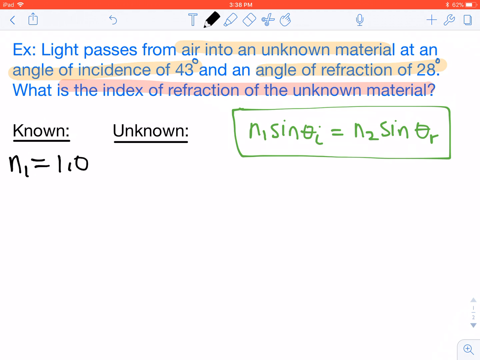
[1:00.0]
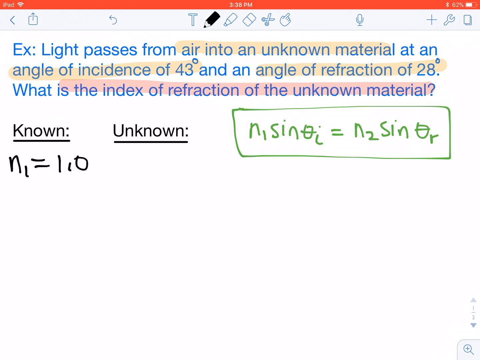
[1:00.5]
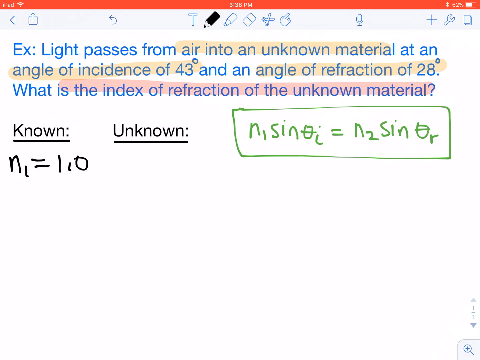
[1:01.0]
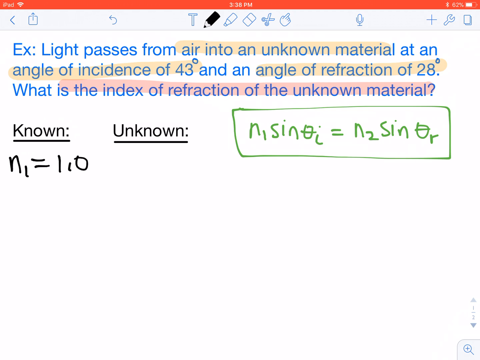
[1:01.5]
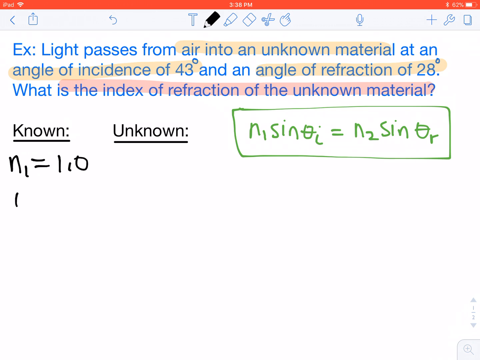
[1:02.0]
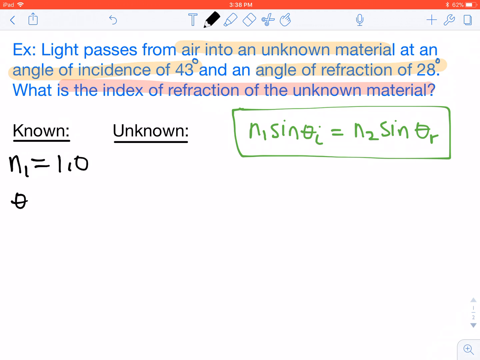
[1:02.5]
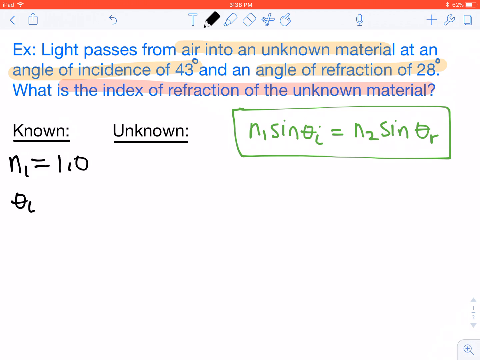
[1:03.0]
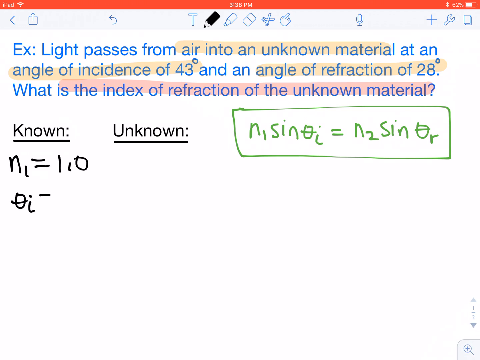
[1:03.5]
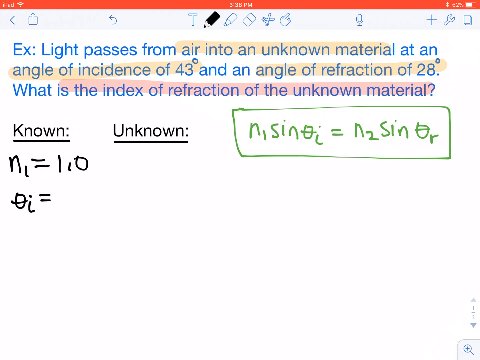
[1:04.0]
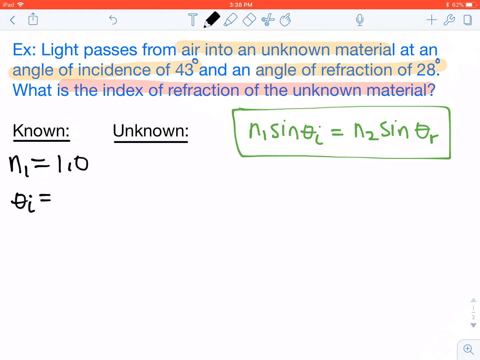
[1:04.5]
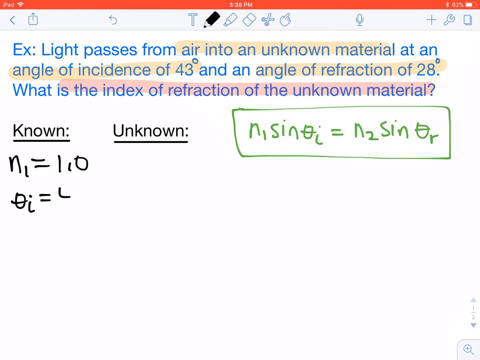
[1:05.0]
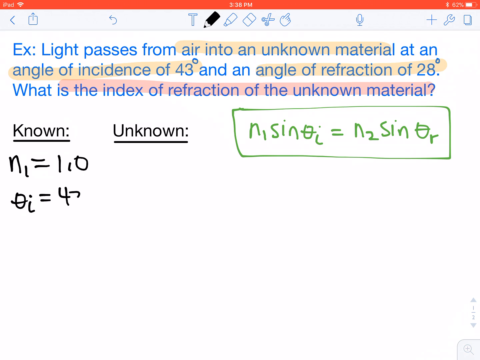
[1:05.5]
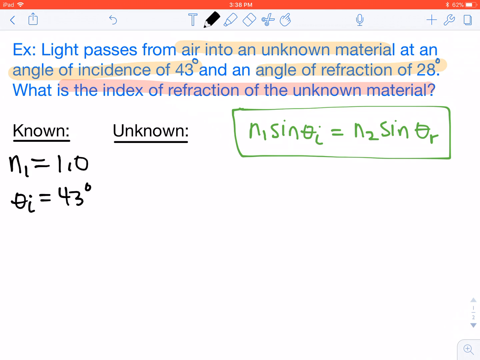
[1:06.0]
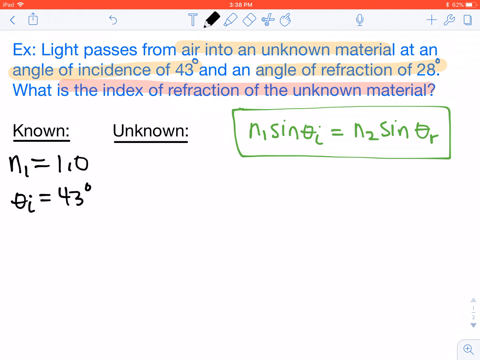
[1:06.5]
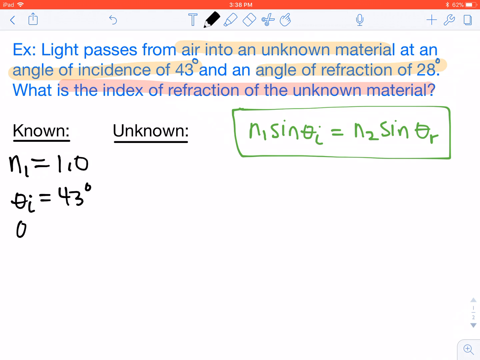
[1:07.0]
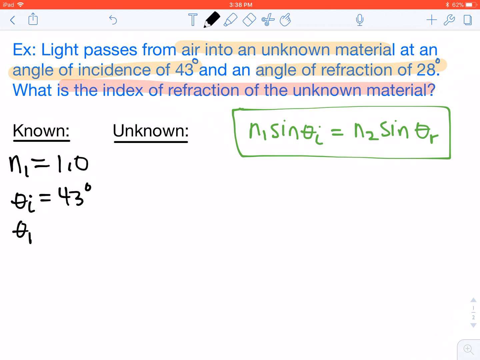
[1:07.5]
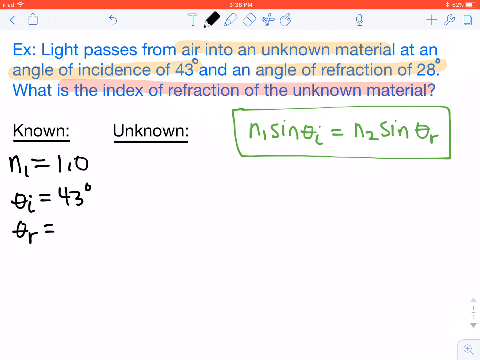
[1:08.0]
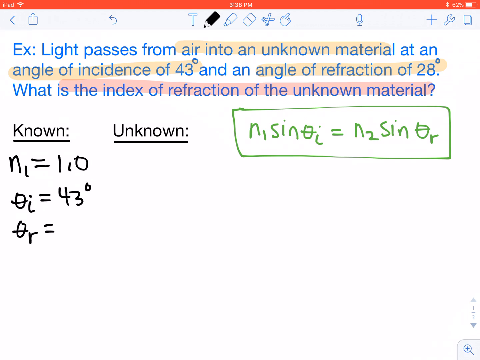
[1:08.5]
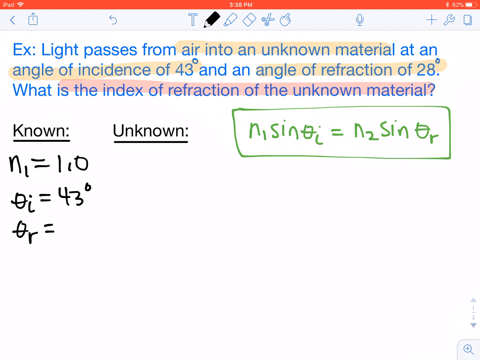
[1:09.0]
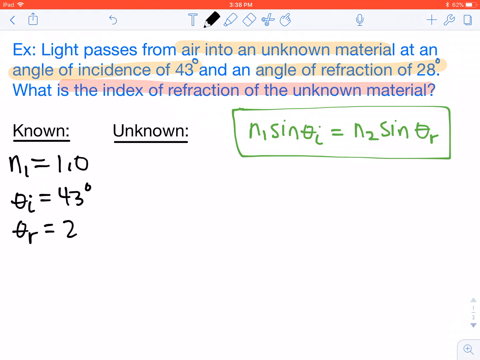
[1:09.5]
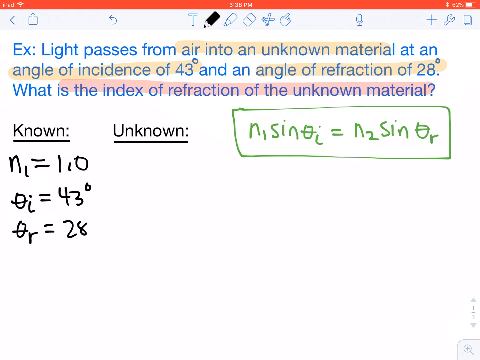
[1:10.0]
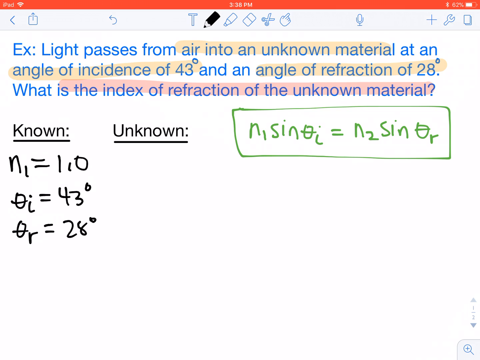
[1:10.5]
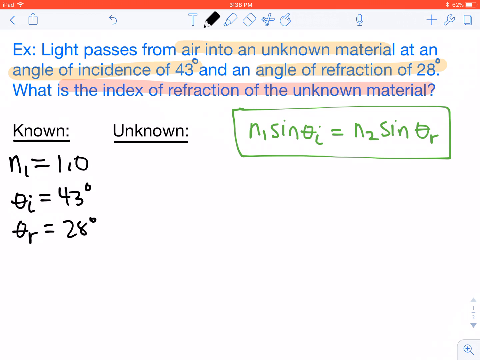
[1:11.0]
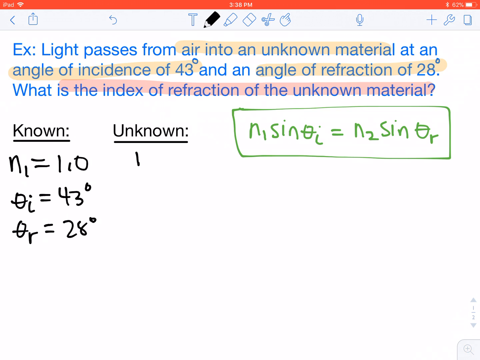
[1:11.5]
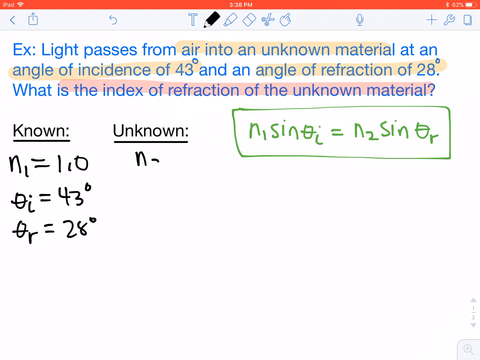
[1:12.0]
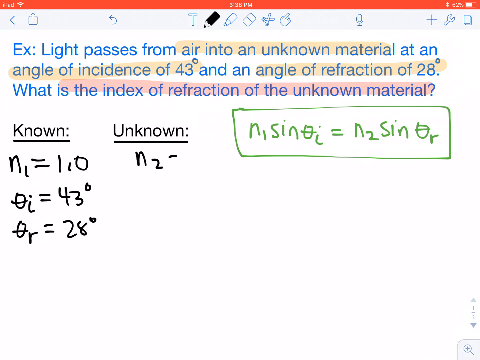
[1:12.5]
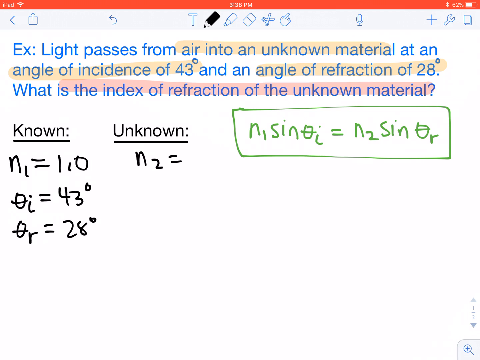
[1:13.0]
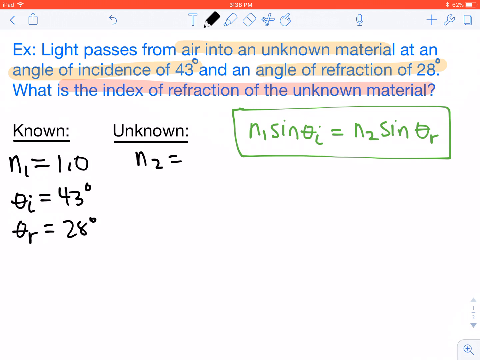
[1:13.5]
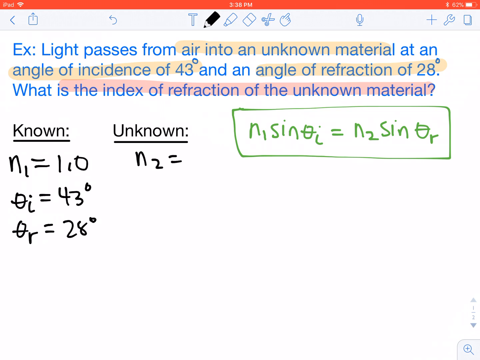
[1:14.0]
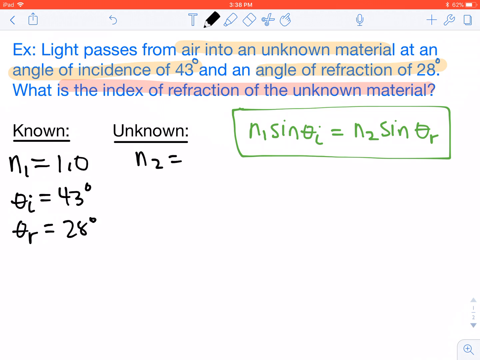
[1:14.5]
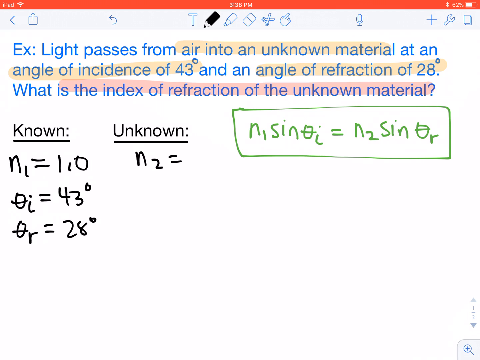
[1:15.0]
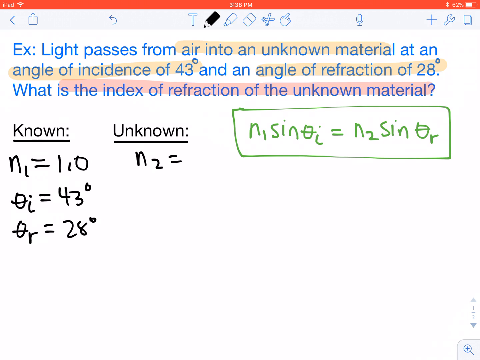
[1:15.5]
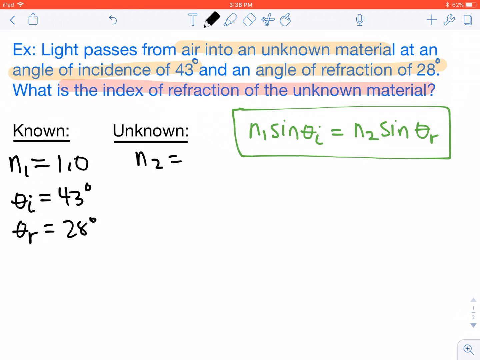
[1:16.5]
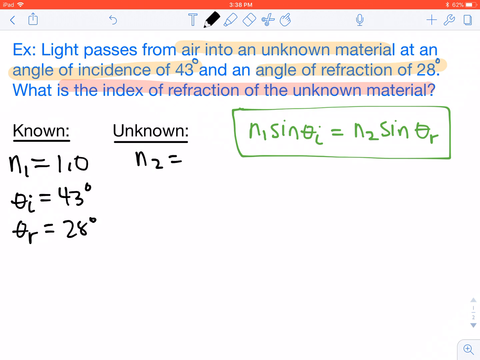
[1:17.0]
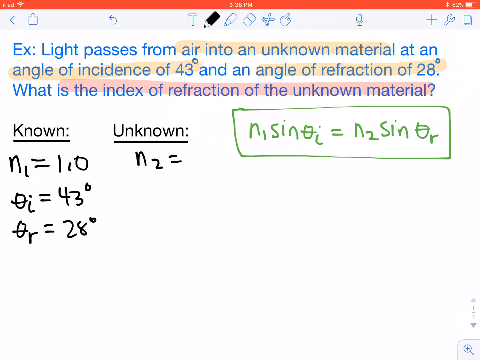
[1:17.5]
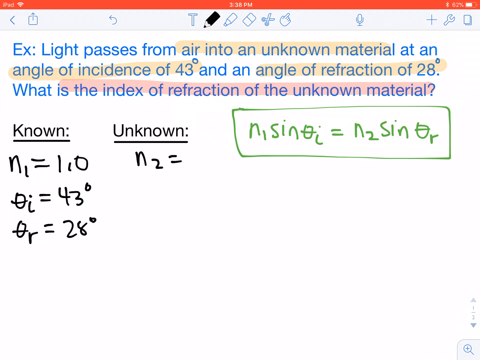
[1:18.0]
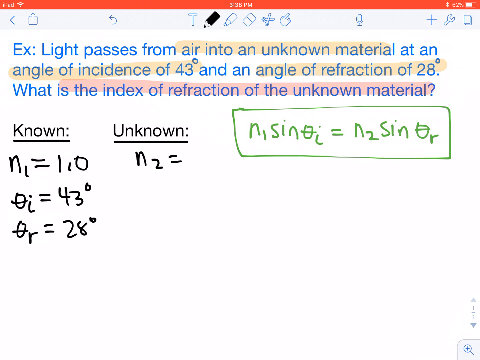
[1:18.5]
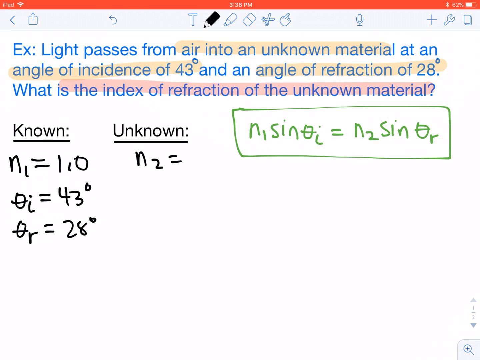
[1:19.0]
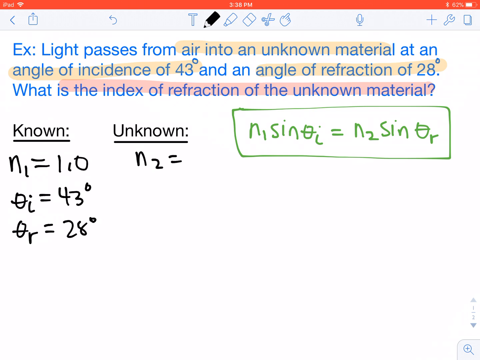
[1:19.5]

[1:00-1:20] The person continues listing numbers and symbols in the known and unknown categories. They write either "OJ" or "OI" followed by "= 43 degrees", and right below it "OR = 28 degrees". In the unknown section they write "N2 =" without yet filling in what it equals.